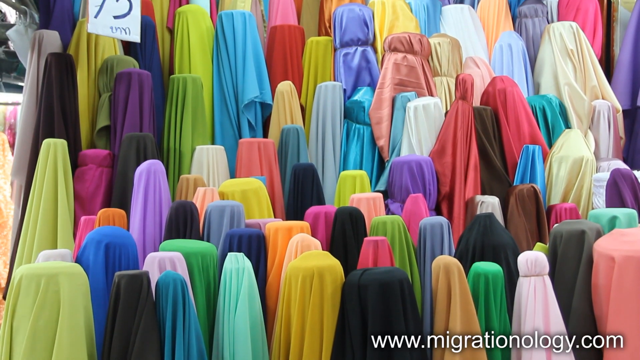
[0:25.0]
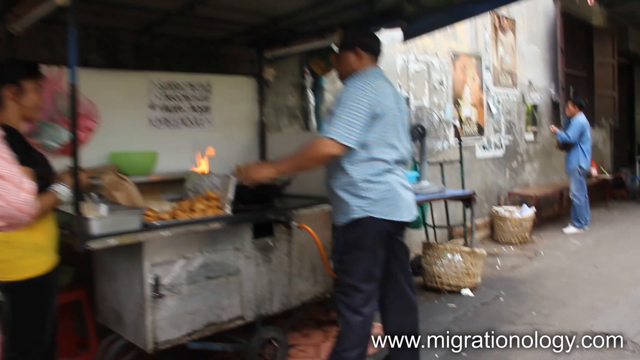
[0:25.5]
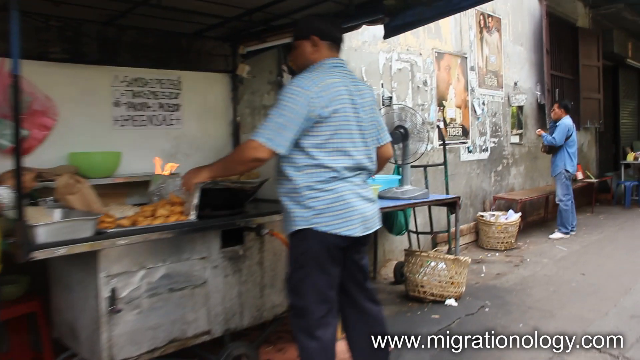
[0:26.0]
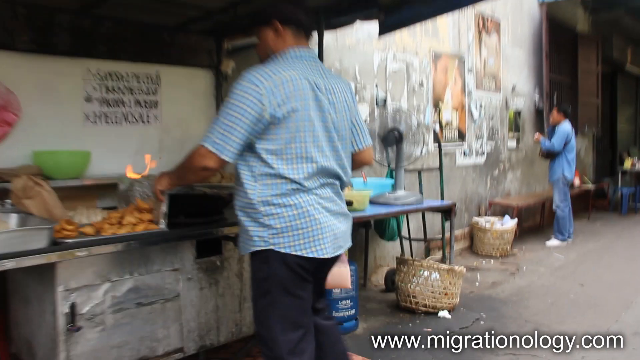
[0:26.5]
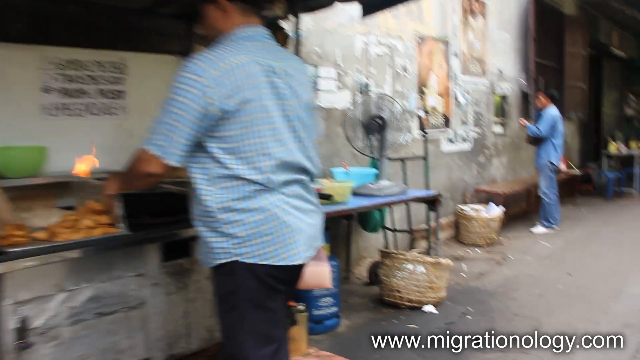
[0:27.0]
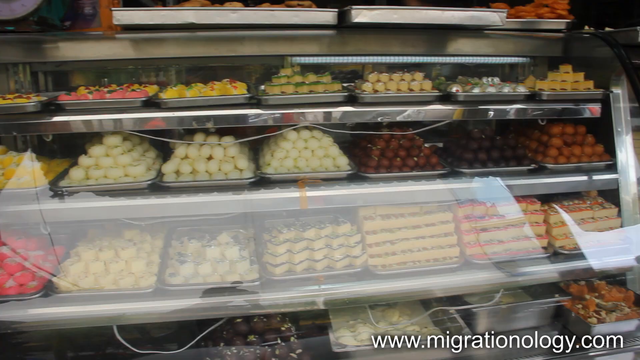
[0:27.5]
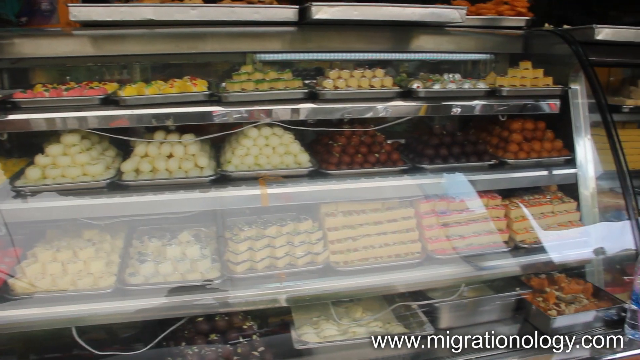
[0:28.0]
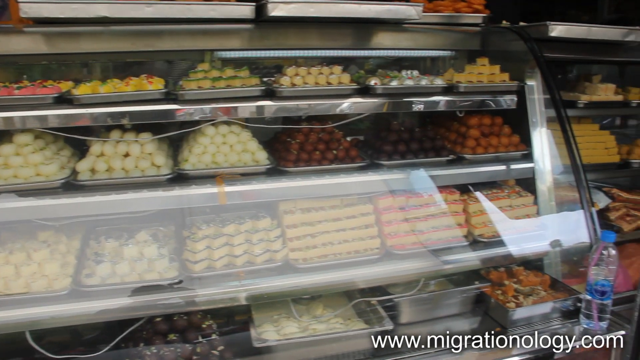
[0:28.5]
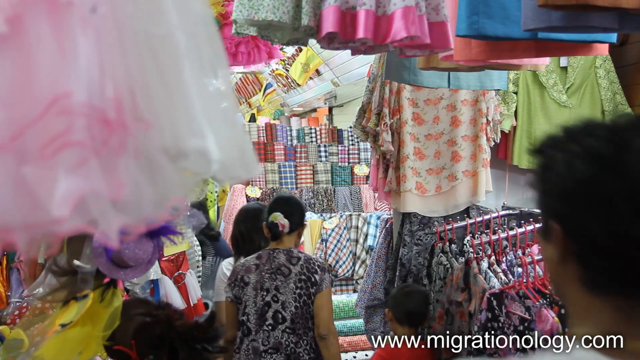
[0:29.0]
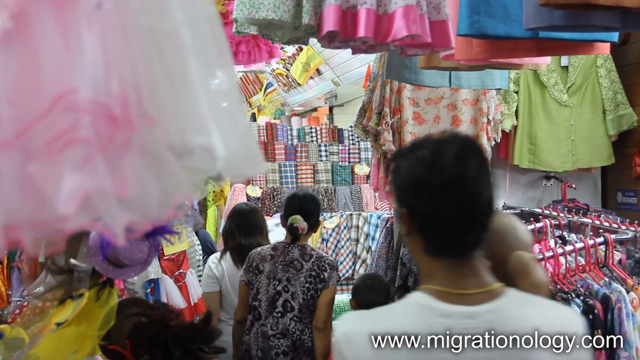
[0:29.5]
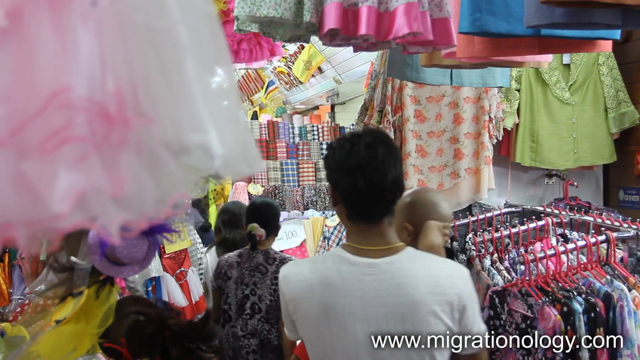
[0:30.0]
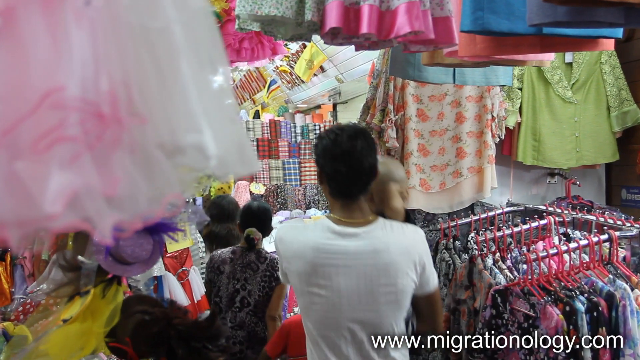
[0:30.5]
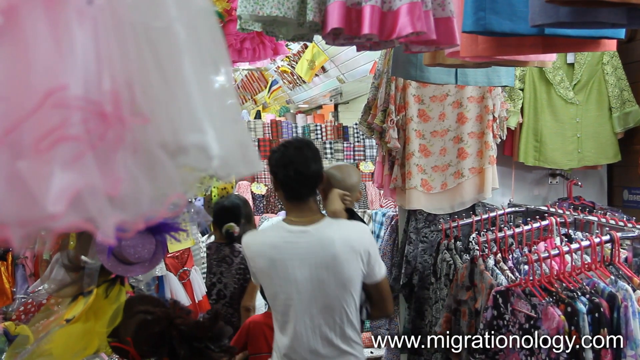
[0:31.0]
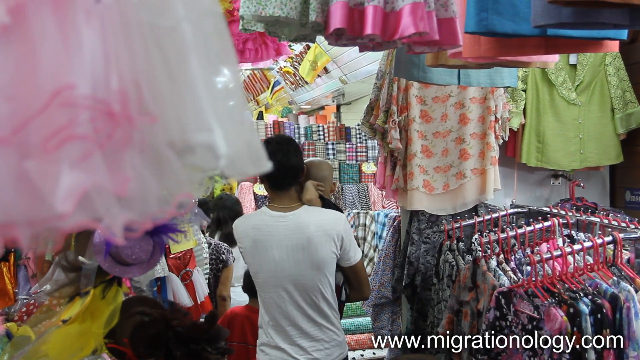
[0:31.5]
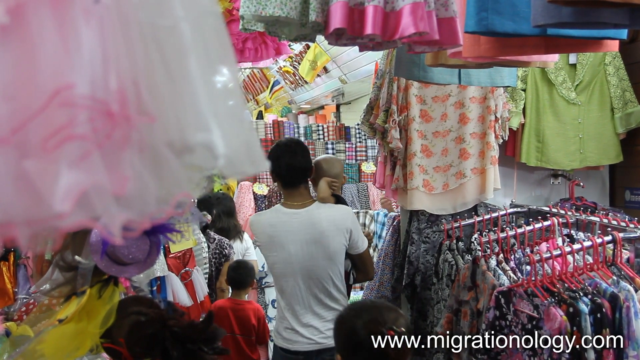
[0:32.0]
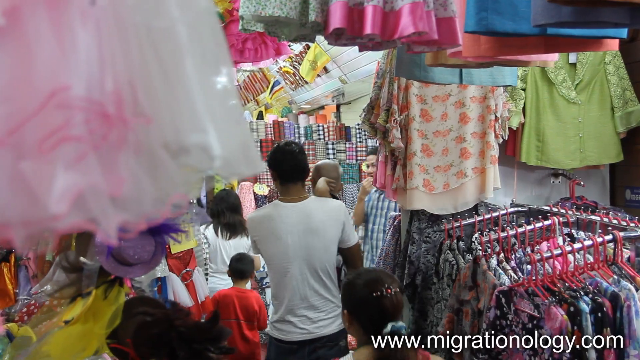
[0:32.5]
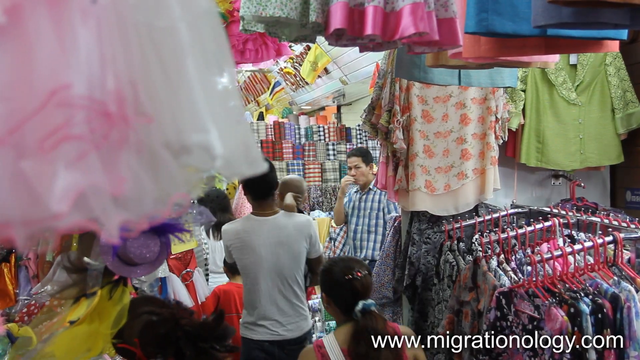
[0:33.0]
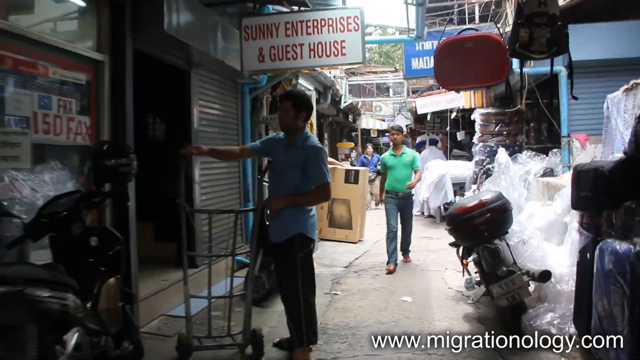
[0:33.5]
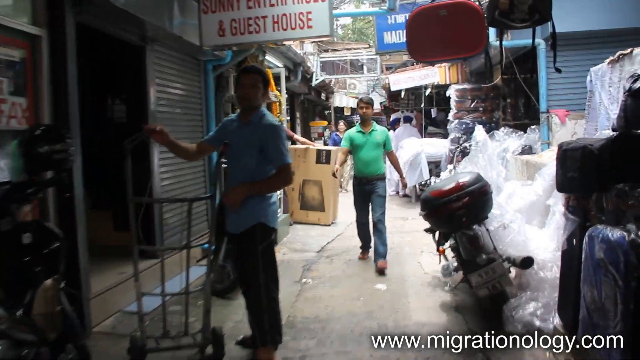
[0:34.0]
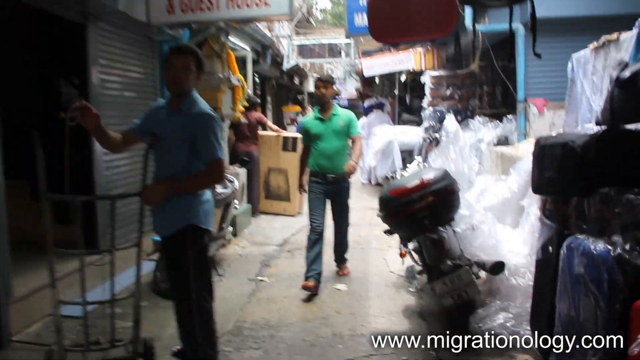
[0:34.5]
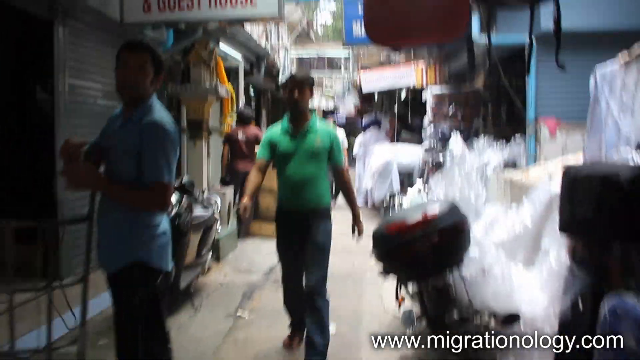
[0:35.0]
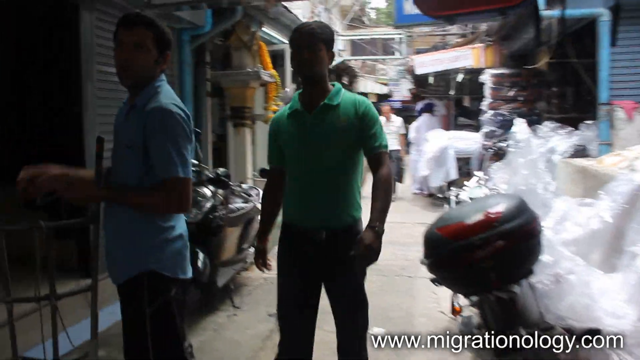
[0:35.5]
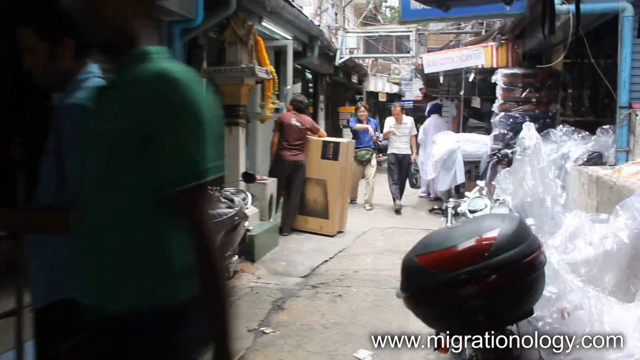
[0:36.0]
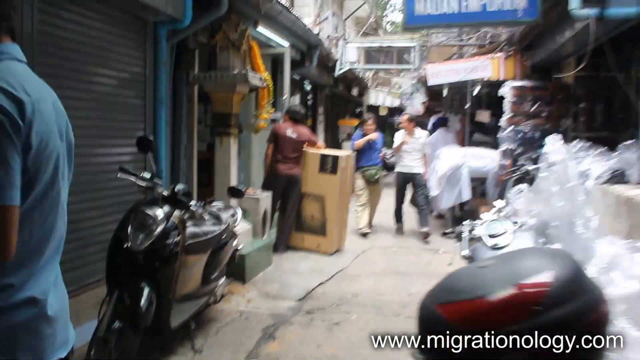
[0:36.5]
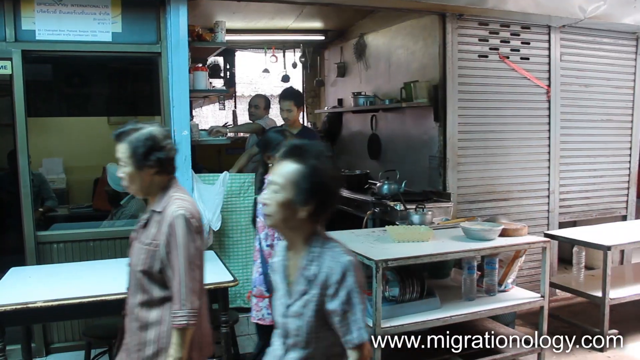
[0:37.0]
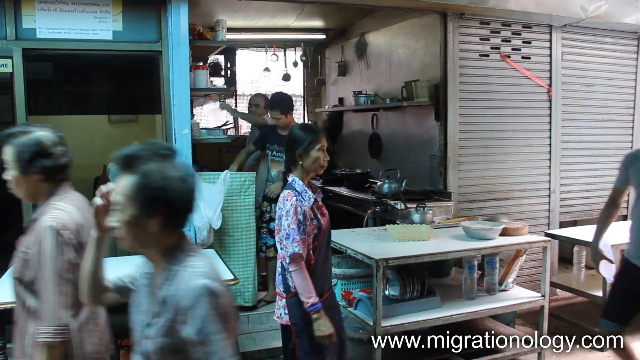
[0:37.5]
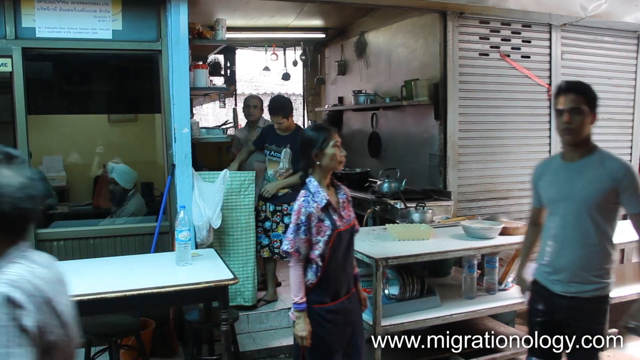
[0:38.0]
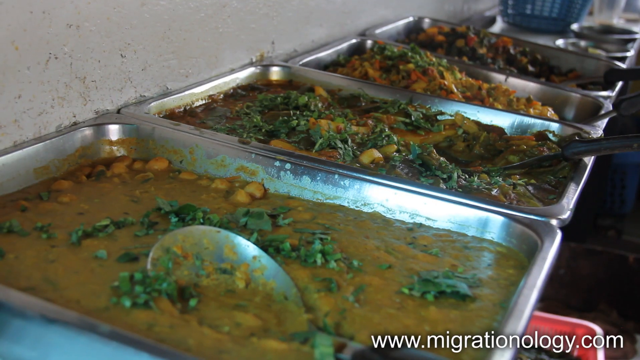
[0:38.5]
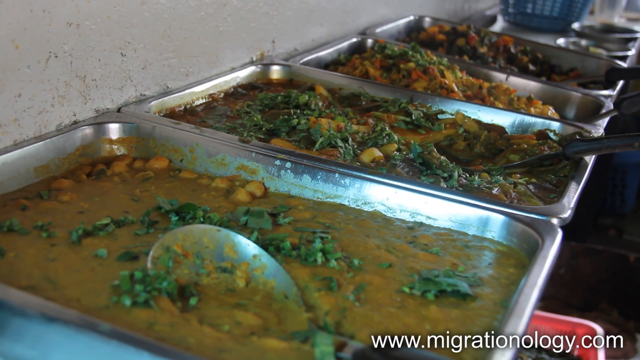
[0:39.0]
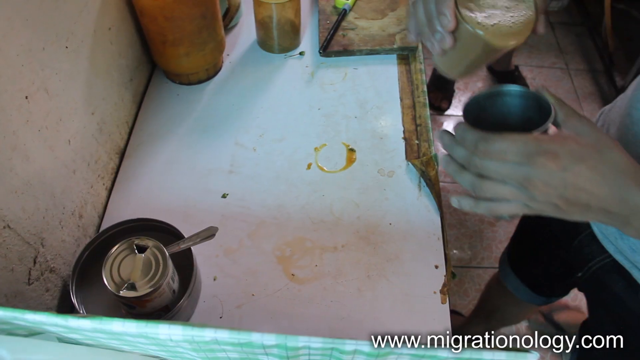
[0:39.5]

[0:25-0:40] A slow-motion shot shows a man making food, seemingly frying it on a grill. The camera pans down the street, showing some sort of deli, then a clothing store, then some men walking through an alley. Next comes a curry or some sort of soup that looks rather spicy, beige in color with green garnishes; it appears to be served outdoors, and the area looks like outdoor street kitchens. The people walking around seem to be a mix of Indian and Thai people; few faces can be seen, though some of their clothing is visible.